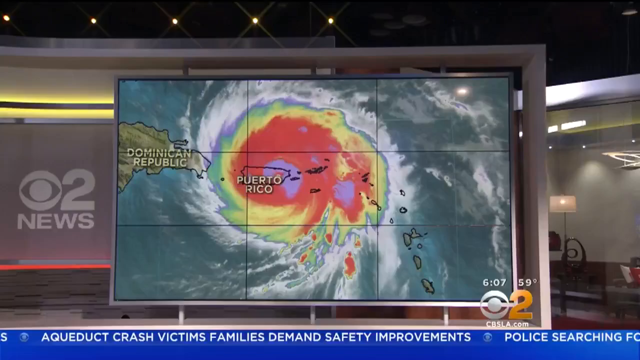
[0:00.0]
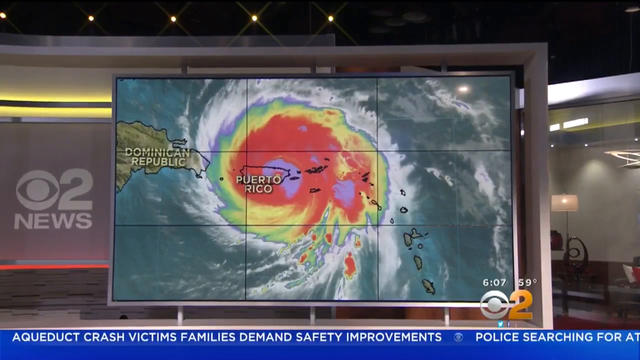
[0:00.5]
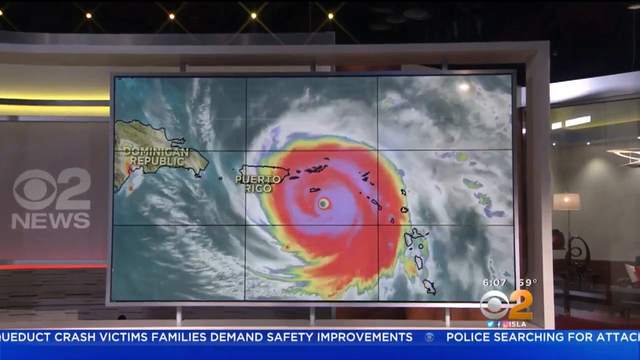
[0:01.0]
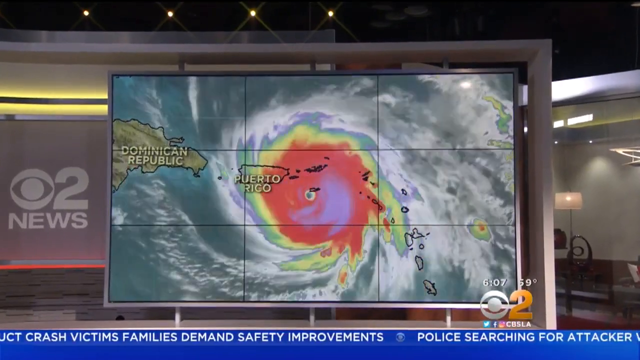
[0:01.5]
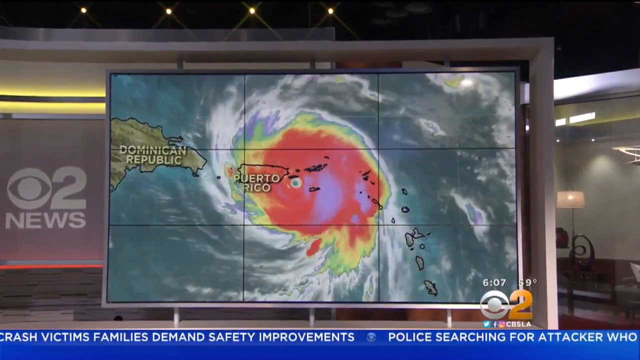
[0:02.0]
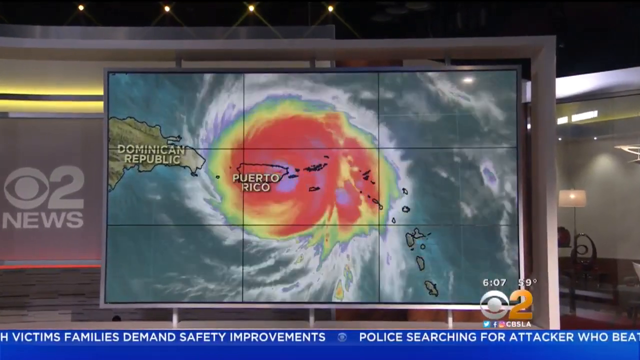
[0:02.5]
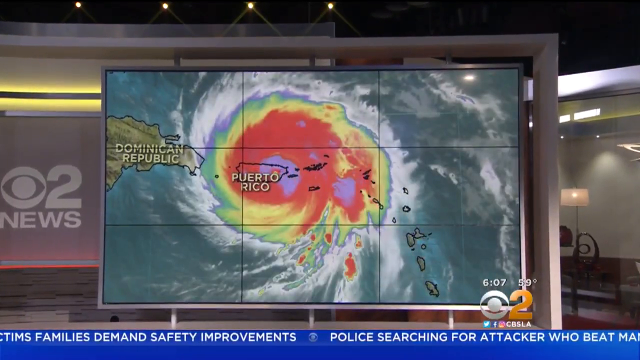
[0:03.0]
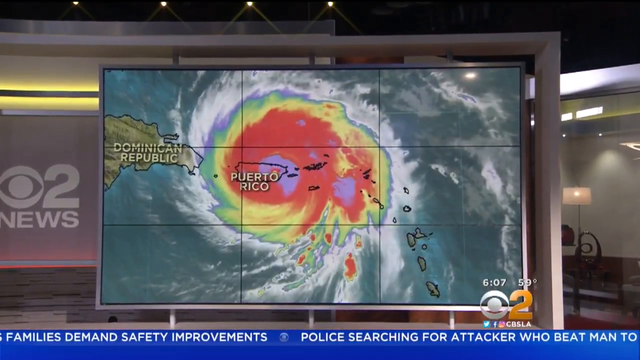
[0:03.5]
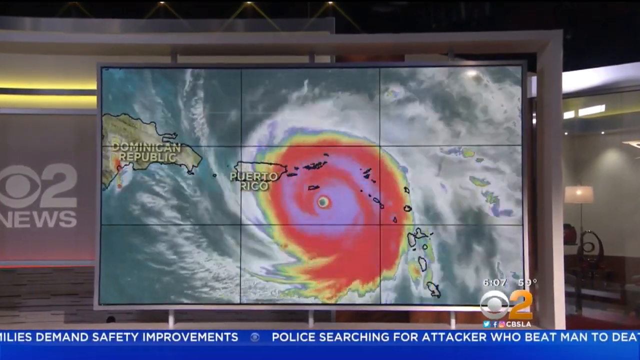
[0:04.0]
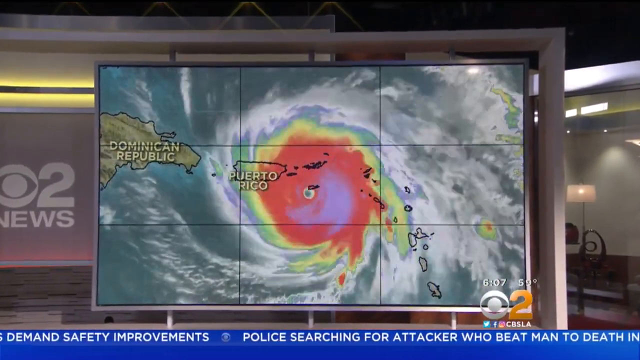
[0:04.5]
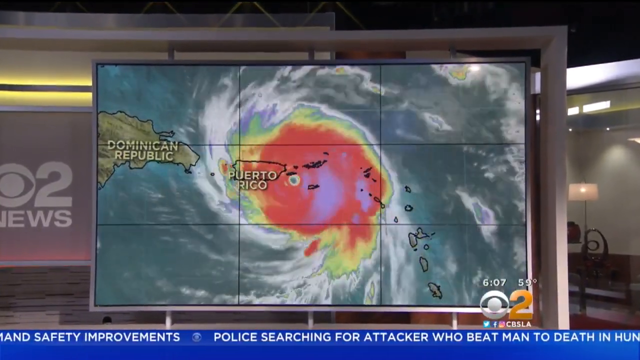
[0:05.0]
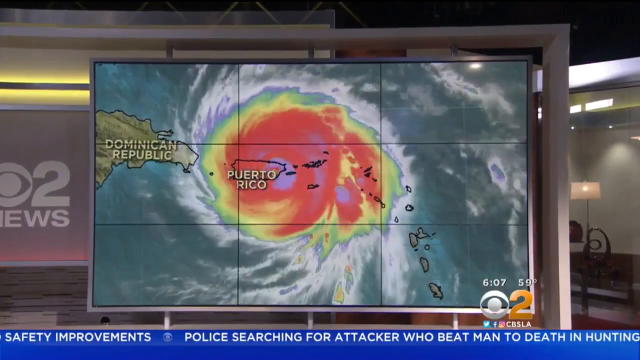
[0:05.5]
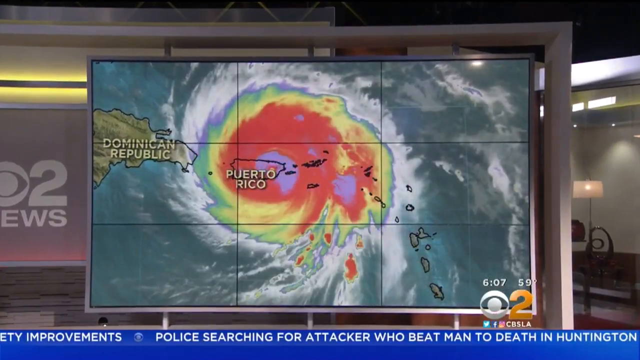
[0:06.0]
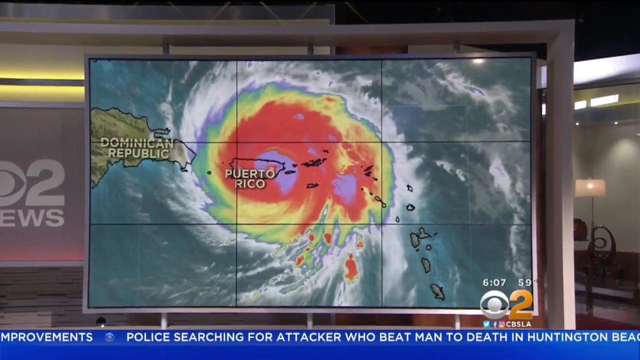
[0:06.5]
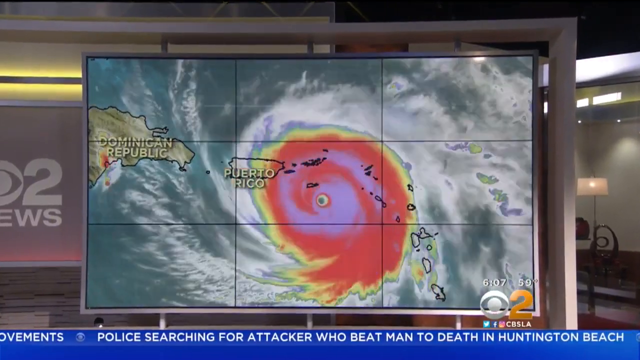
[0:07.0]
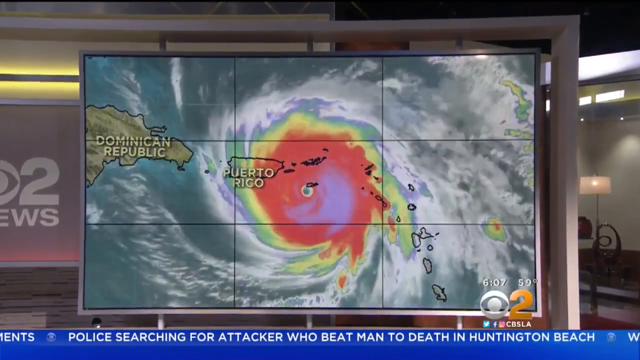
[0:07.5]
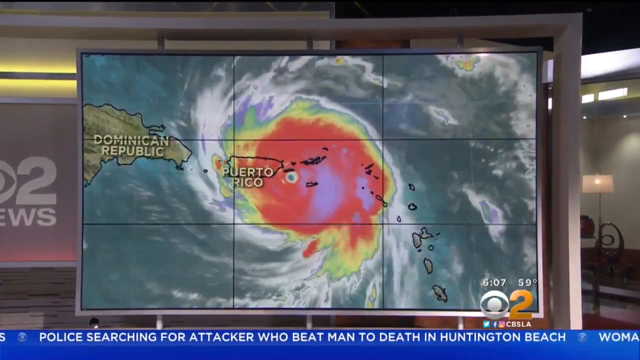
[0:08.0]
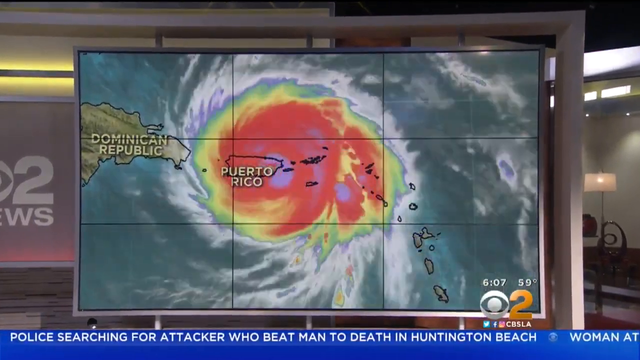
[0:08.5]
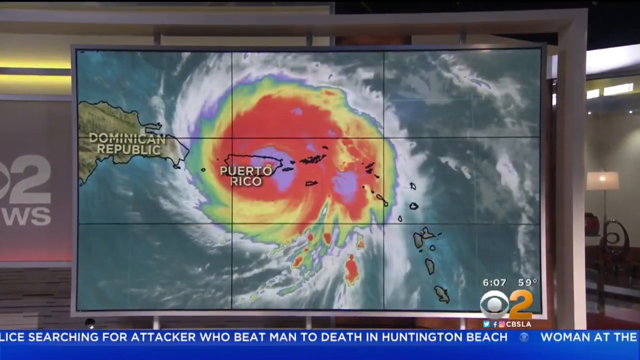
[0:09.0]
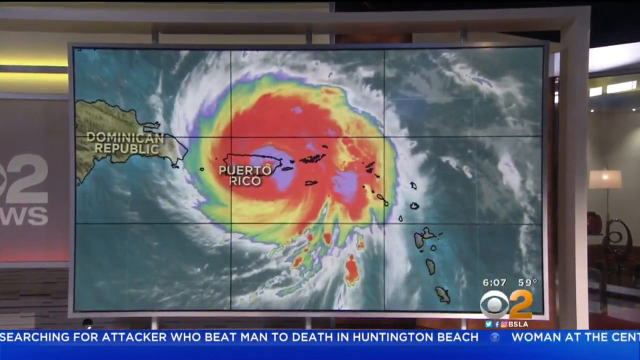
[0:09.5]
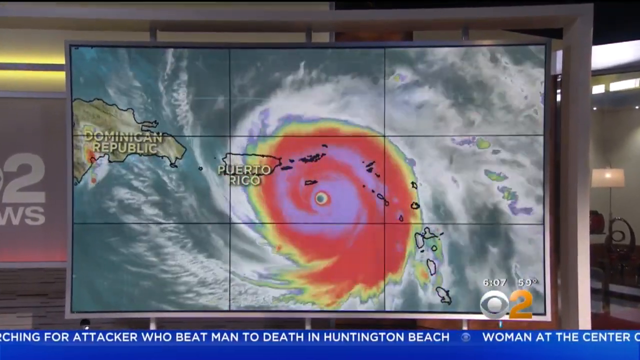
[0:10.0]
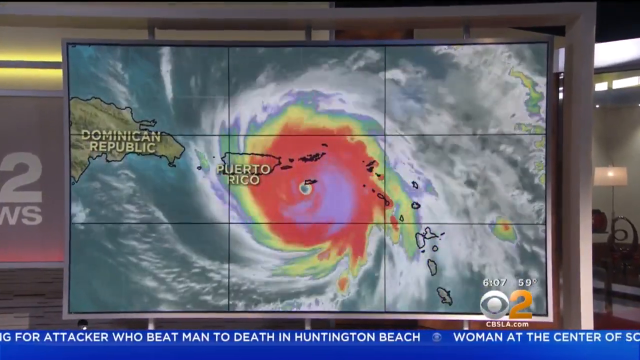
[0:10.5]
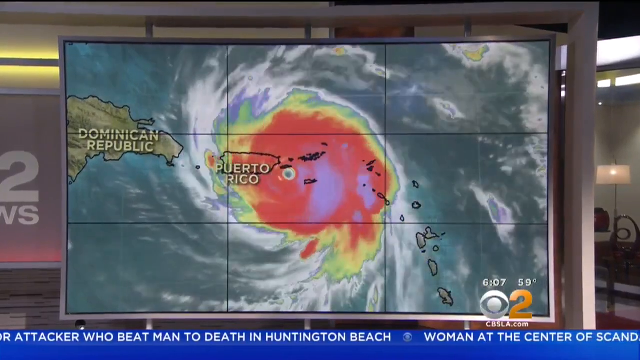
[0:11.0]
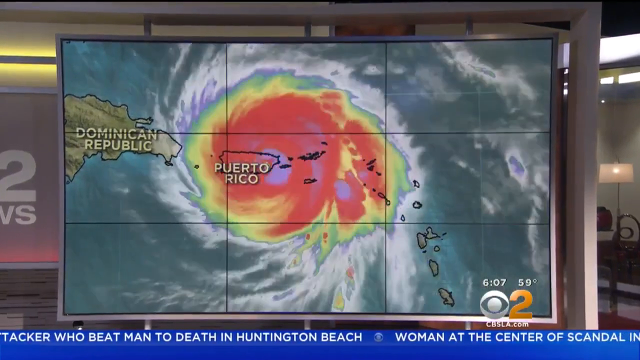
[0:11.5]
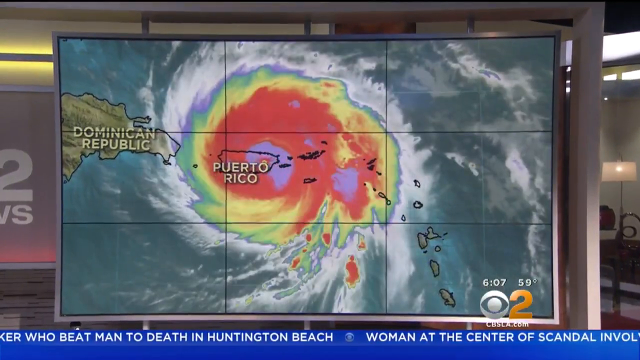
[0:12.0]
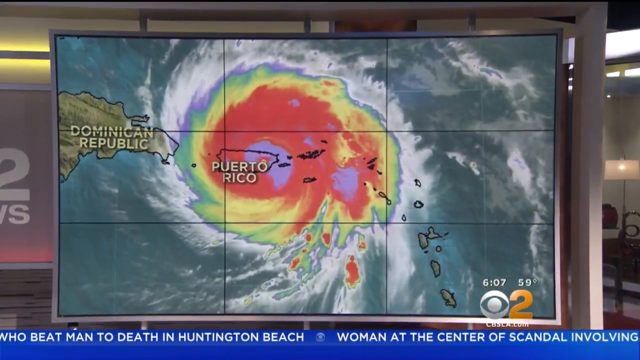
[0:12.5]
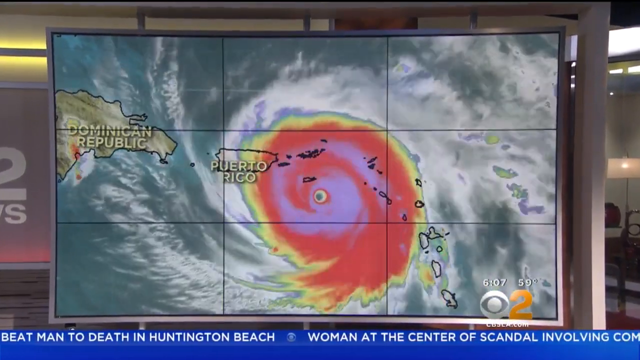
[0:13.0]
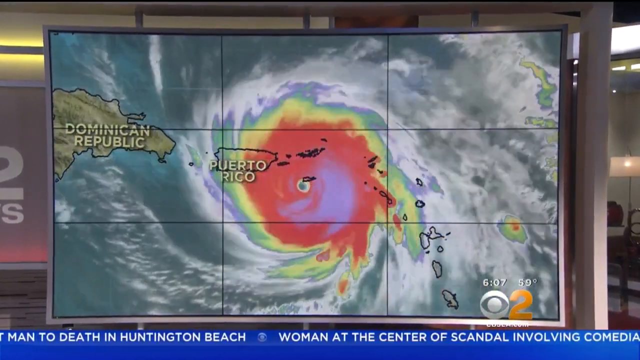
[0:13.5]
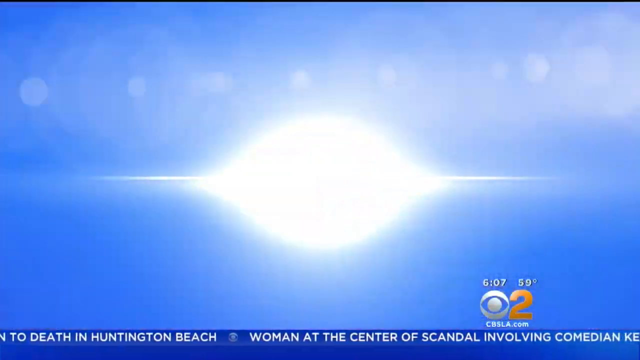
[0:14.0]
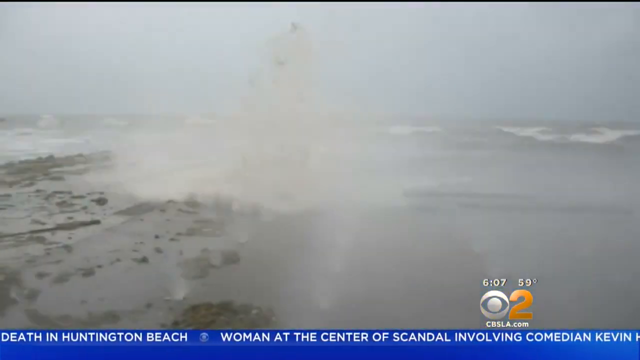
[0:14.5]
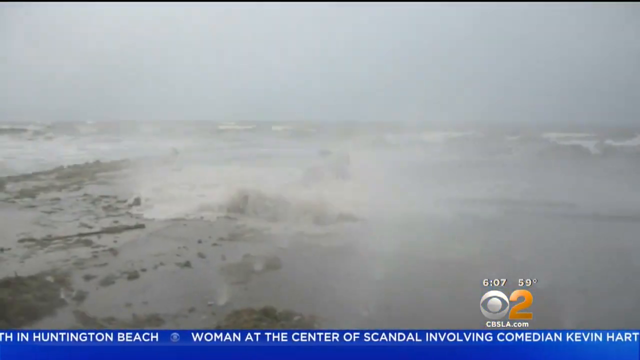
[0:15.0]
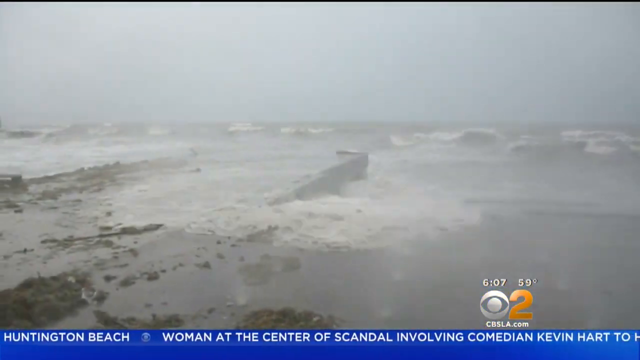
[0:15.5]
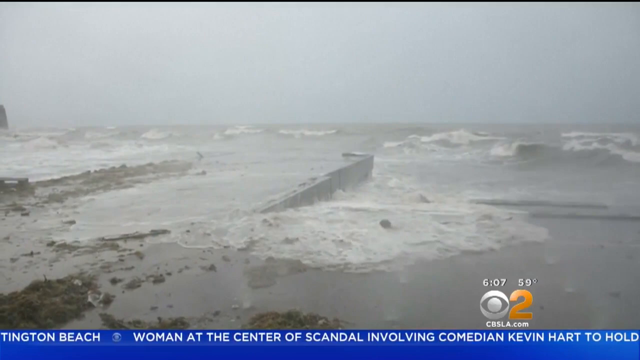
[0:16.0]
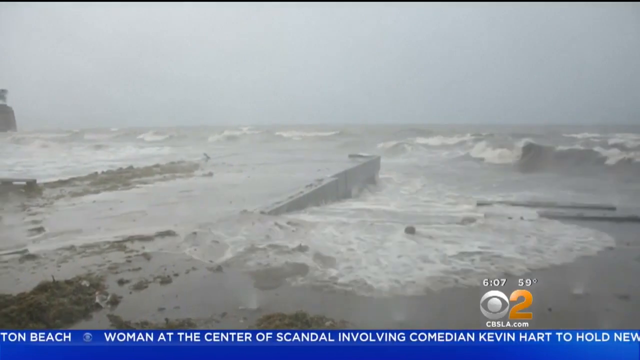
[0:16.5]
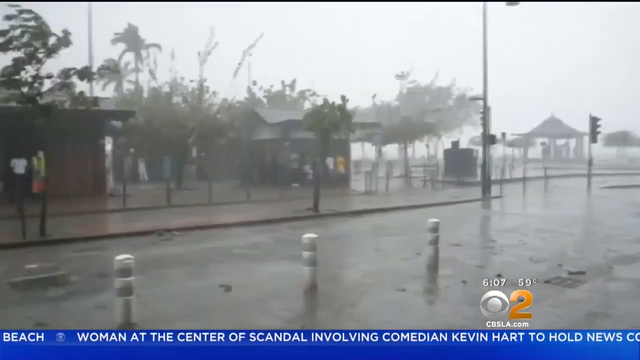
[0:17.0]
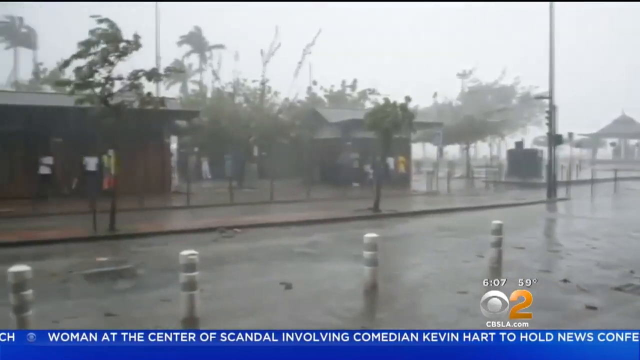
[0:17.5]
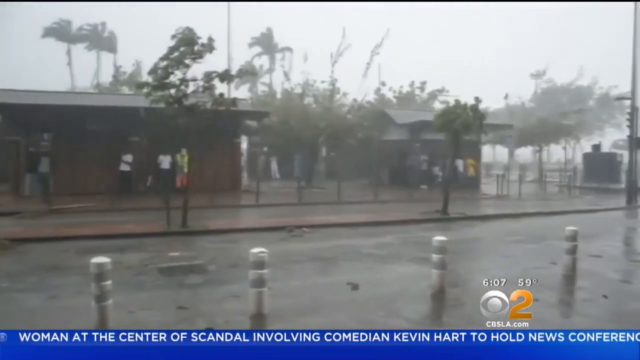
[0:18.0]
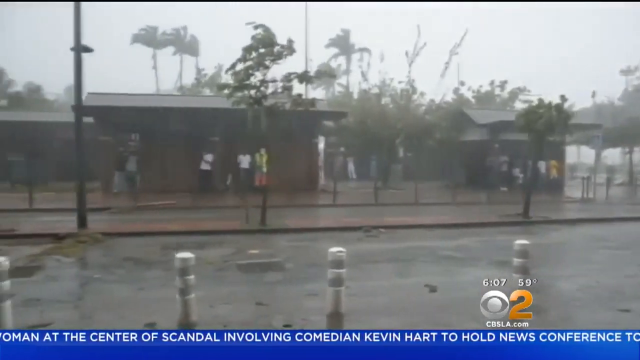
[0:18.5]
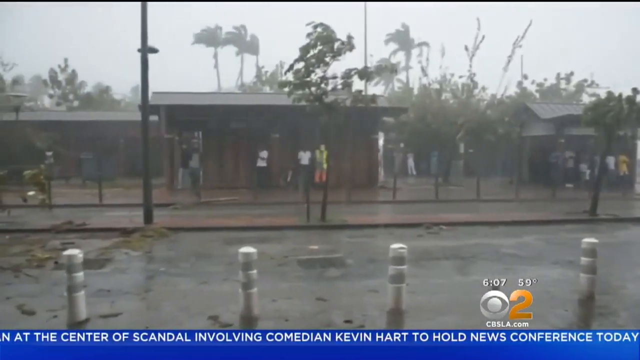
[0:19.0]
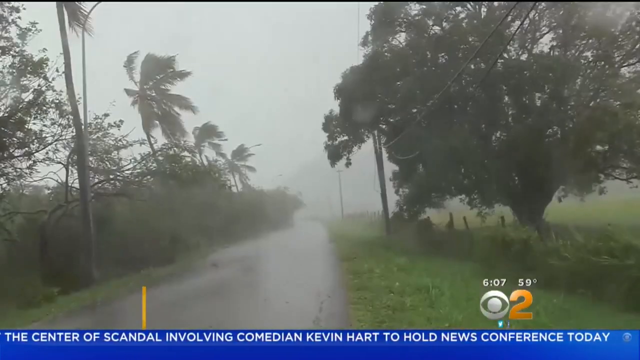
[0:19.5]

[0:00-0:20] A weather forecast shows a very strong wind moving from the lower part to the upper part of the frame. Over the ocean the wind seems very strong, and the waves appear very dangerous; it seems to be a tsunami or something similar.